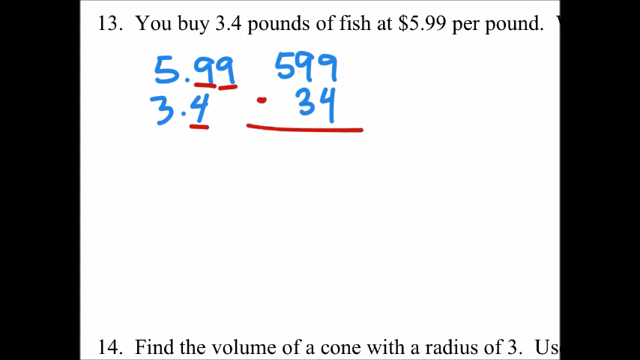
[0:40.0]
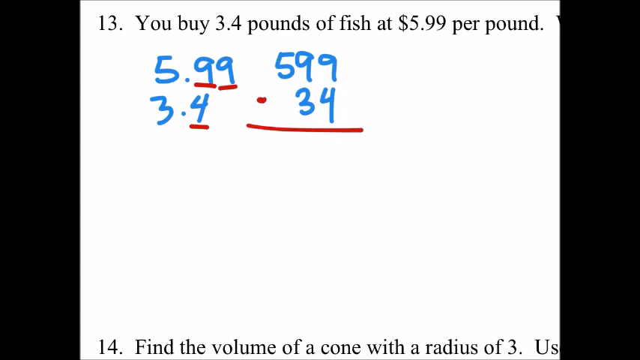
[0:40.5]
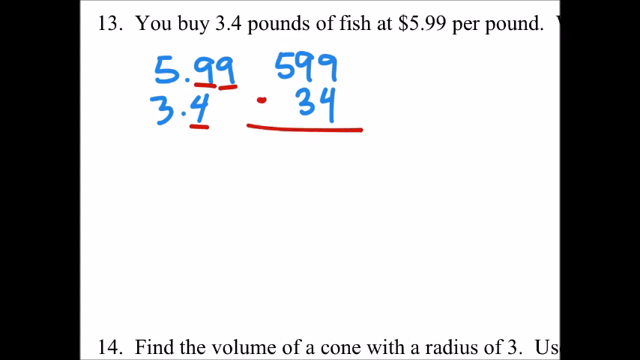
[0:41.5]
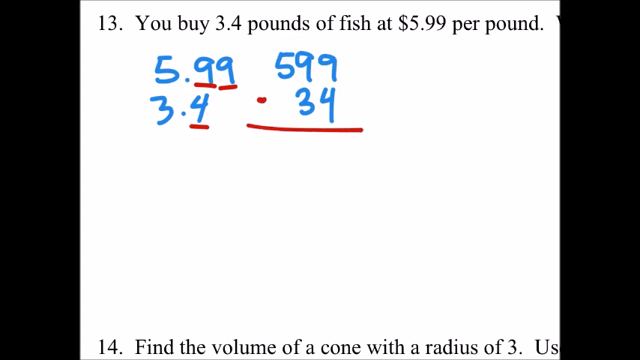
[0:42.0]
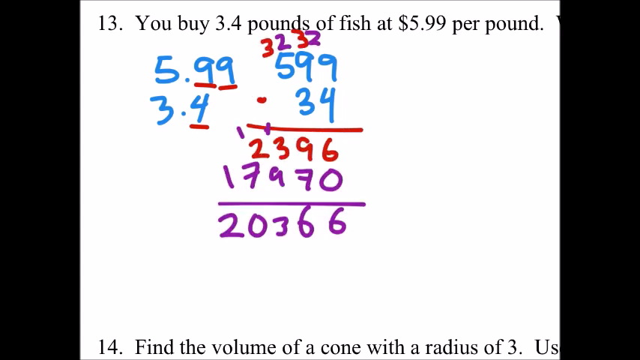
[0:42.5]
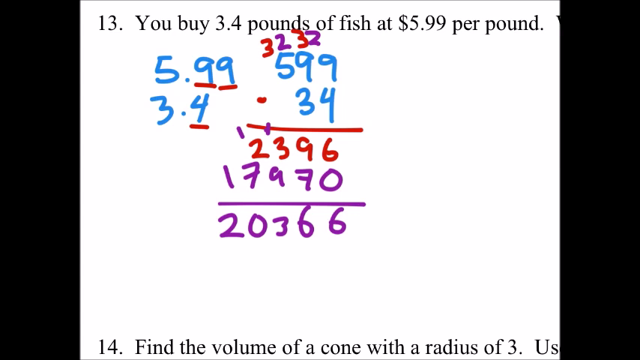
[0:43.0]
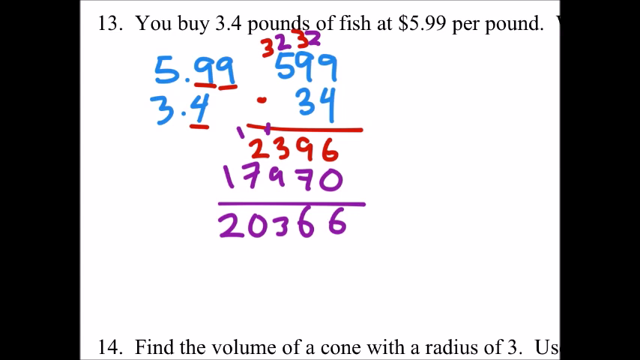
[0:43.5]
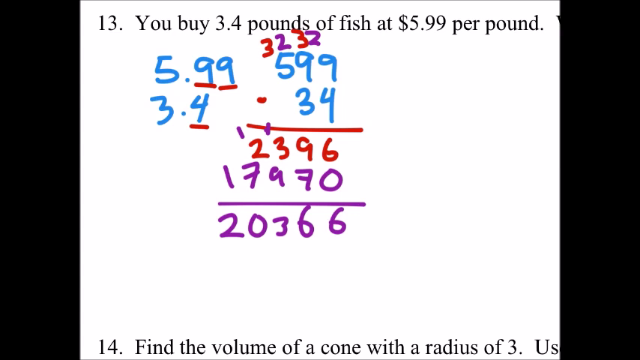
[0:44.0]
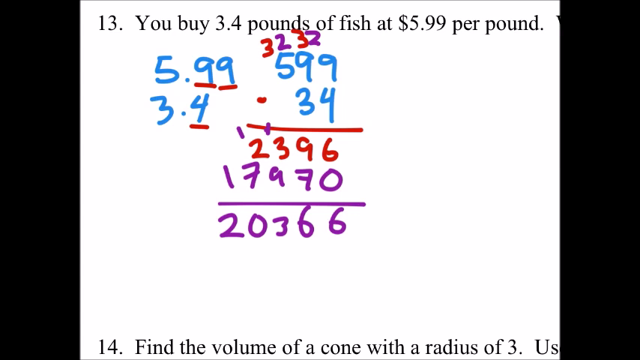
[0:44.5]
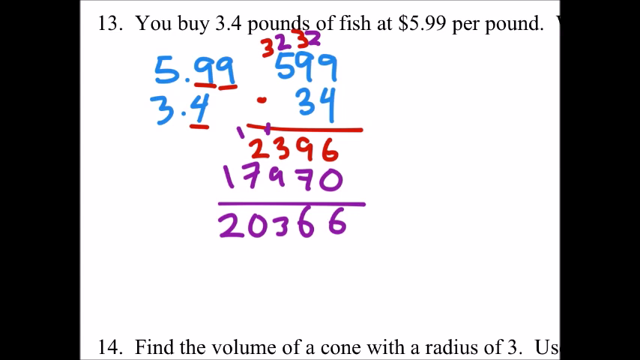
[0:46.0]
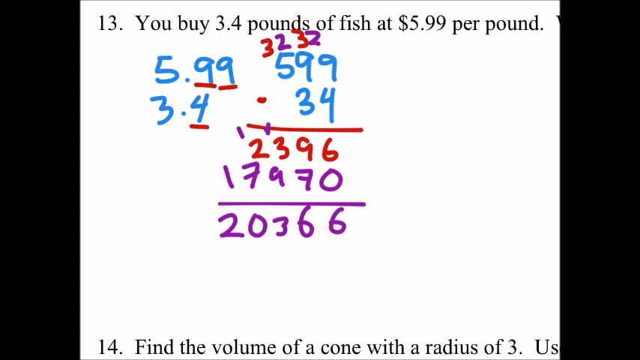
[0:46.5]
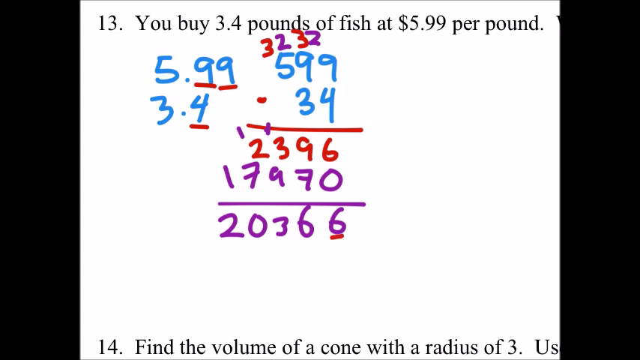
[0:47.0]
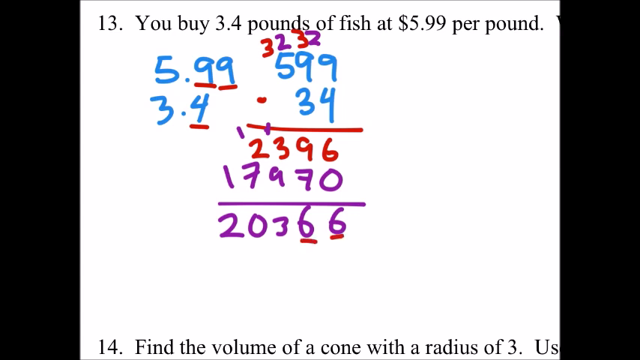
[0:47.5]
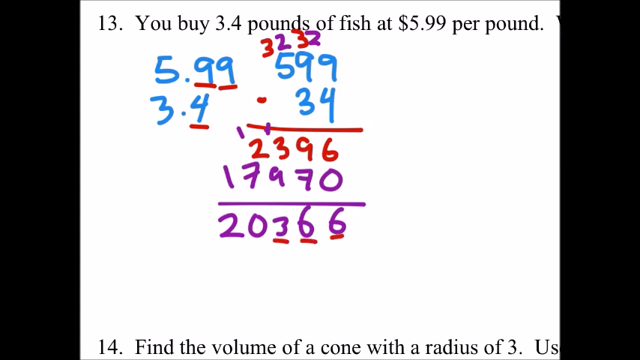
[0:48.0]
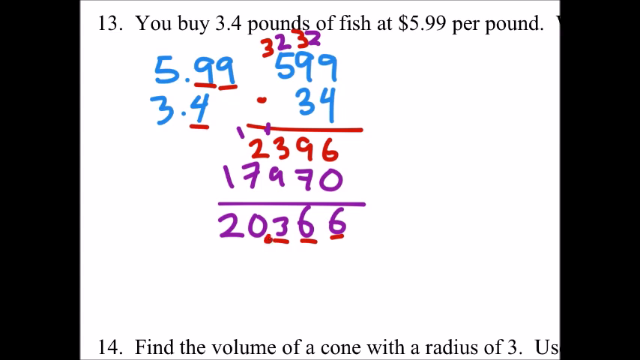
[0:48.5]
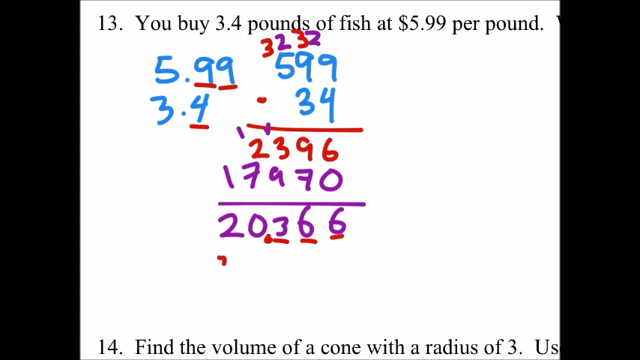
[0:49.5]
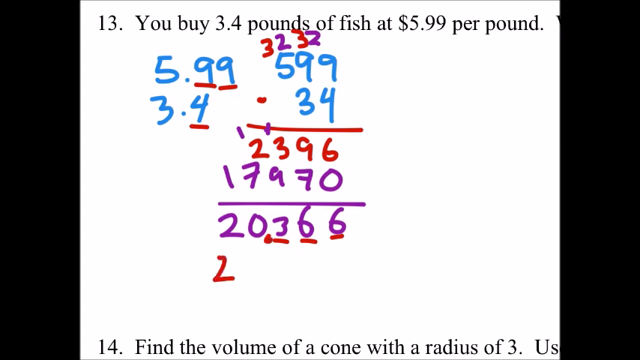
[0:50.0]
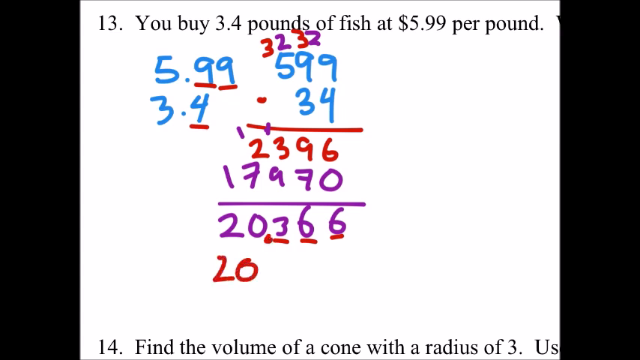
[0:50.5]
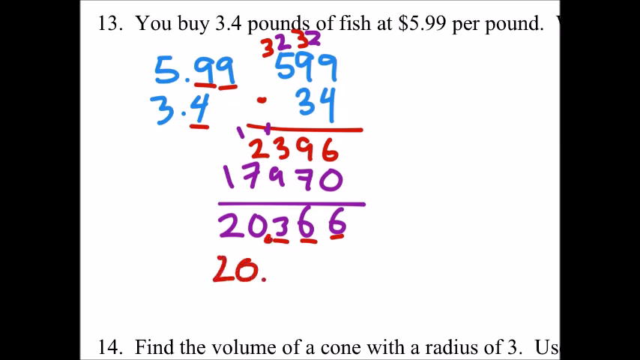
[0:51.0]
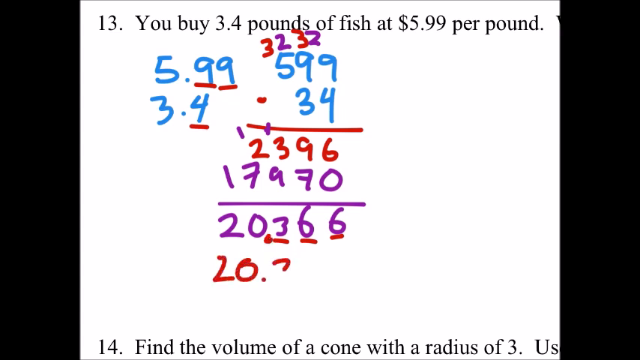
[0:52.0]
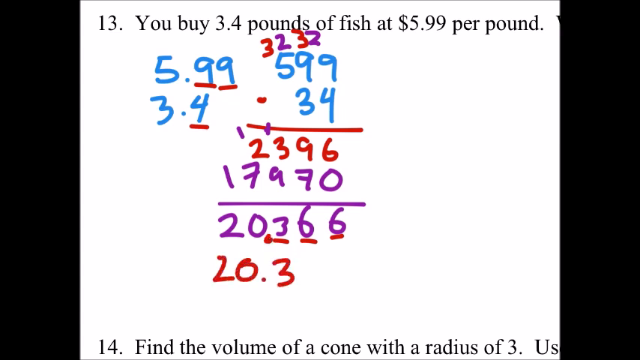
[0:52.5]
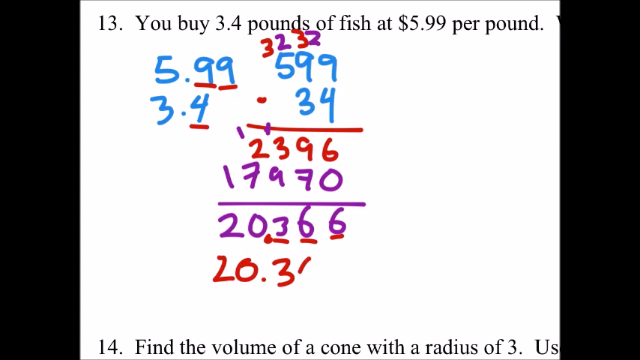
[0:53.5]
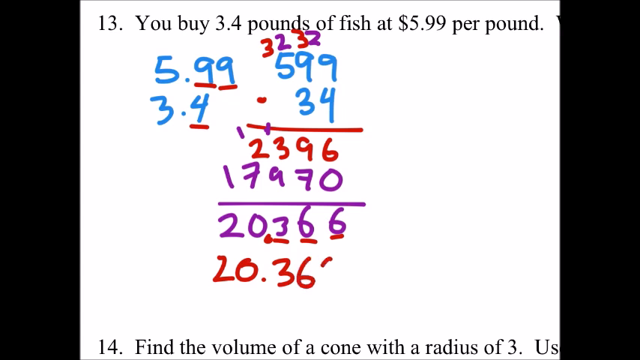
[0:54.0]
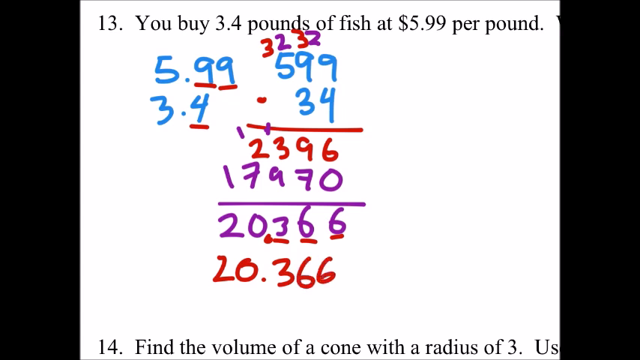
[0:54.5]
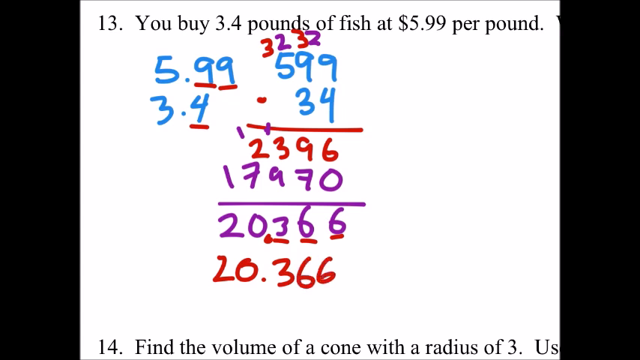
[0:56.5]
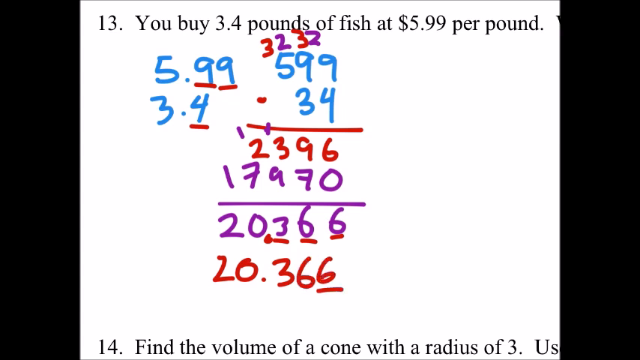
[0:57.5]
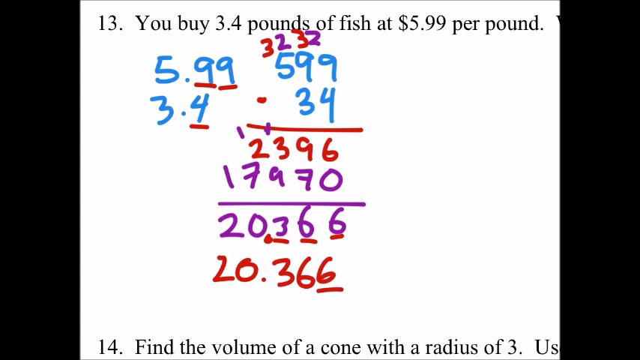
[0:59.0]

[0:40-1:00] The screen appears to be black, and in the center and right is problem "13." followed, after a space, by "you buy 3.4 pounds of fish at $5.99 per pound." In blue, 5.99 appears, and right beside it to the right is 599 in blue. Directly under 5.99 is 3.4, and directly under 599 a 3 and a 4 are written in blue. In the left set of numbers, two red lines are placed under the two nines, and a red line is placed under the 4 of the 3.4 below. In the second math problem, a red minus sign is placed by the 599 and a line goes under the 34. Number 14 comes in. Several numbers then appear as if someone is solving the problem, and the writing turns purple. The bottom number is 2366, and several red lines appear under the 366. Then 20.366 appears in red with a red underline under the 6.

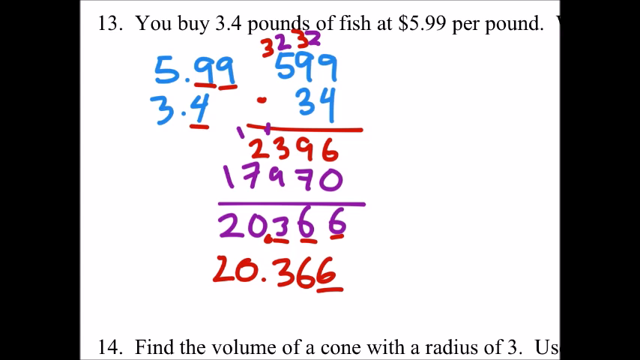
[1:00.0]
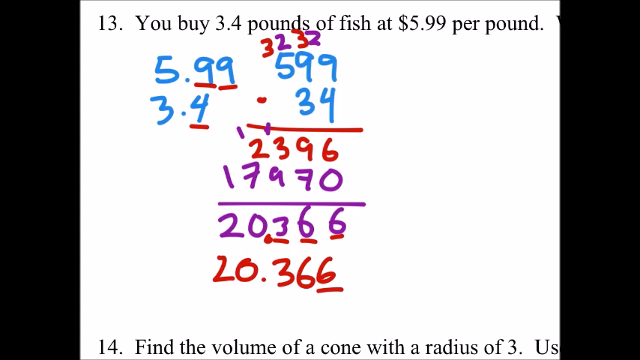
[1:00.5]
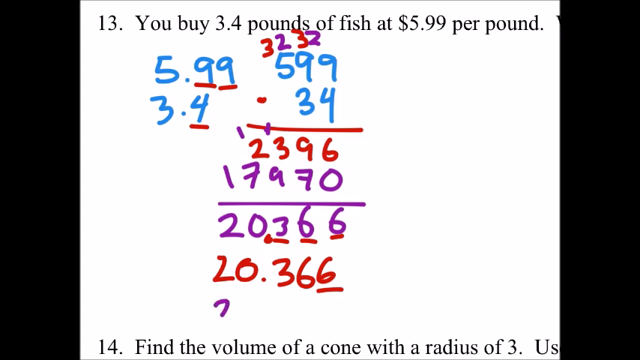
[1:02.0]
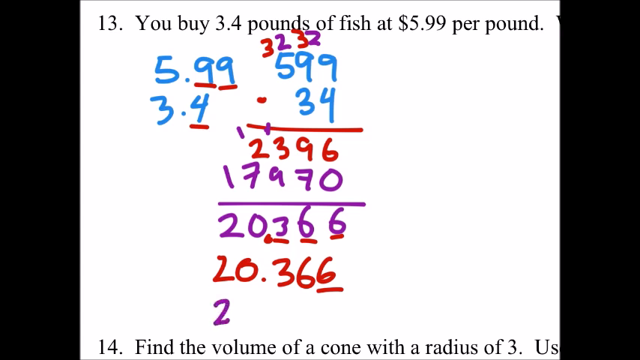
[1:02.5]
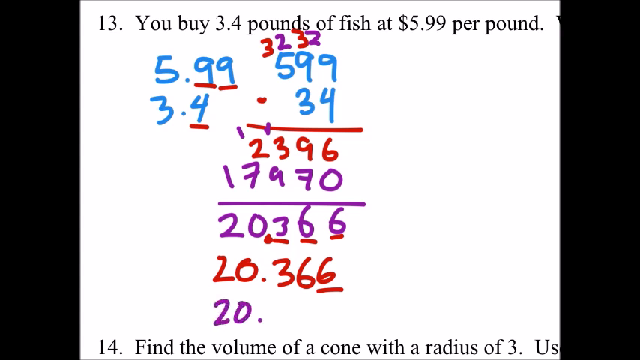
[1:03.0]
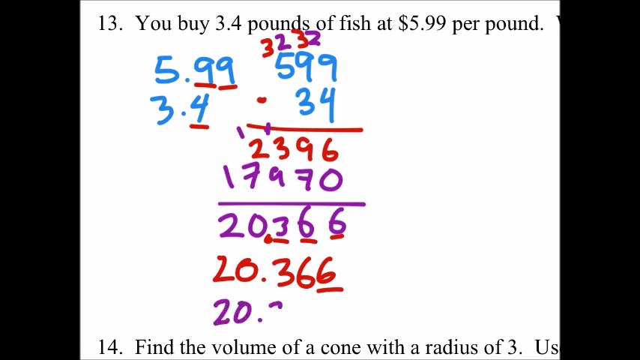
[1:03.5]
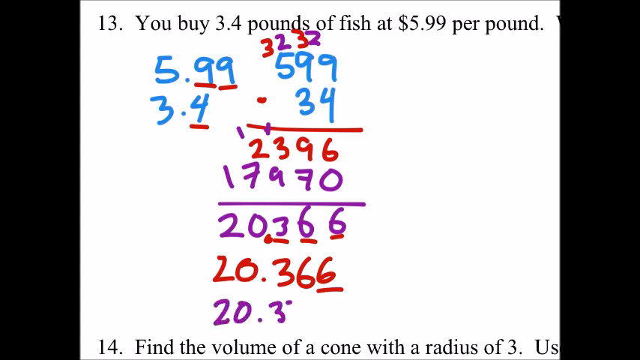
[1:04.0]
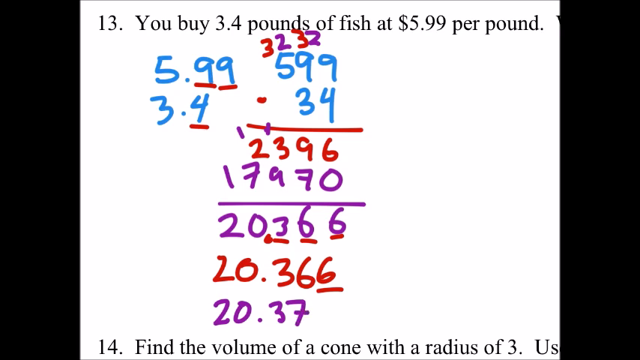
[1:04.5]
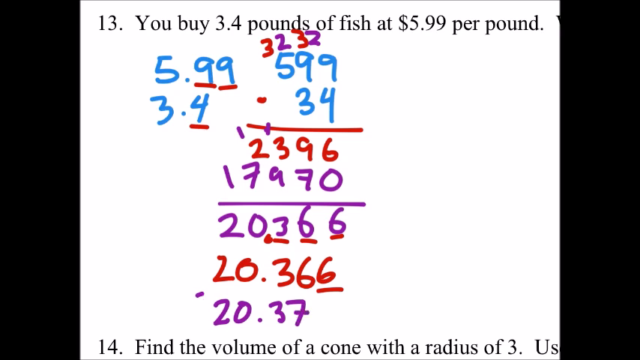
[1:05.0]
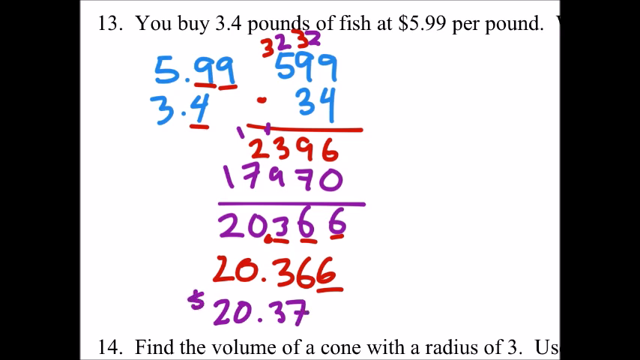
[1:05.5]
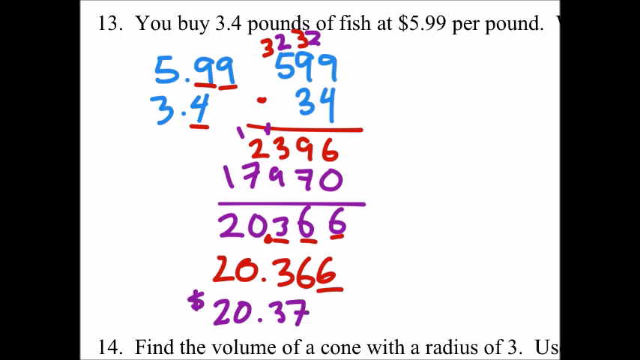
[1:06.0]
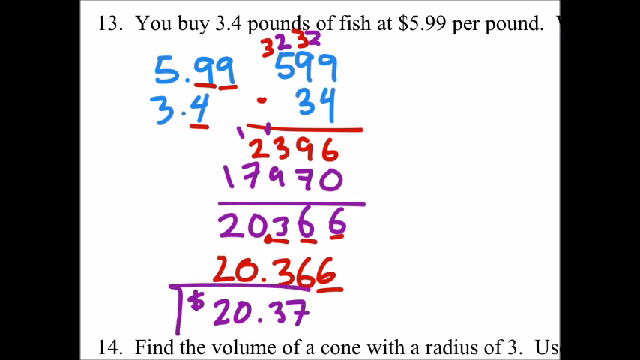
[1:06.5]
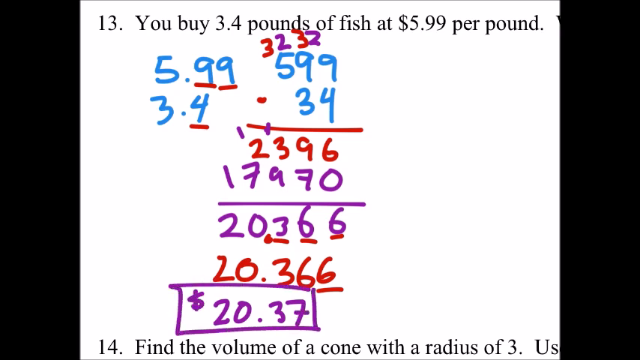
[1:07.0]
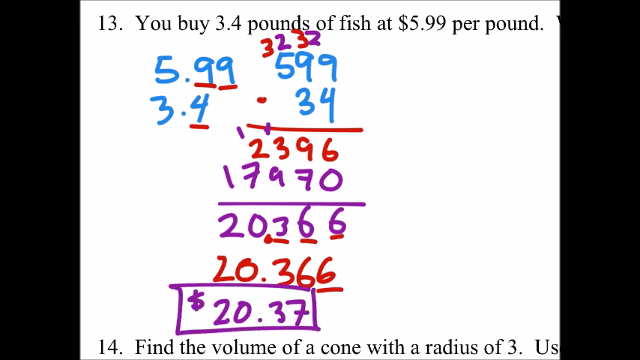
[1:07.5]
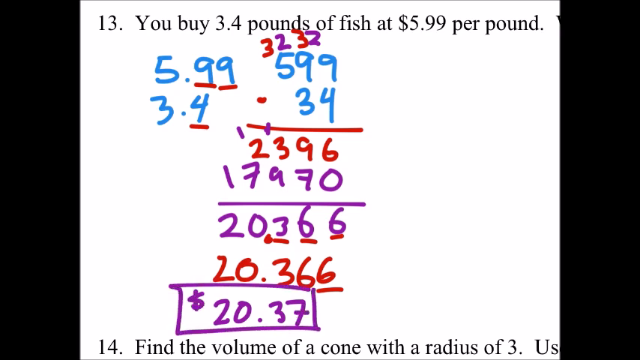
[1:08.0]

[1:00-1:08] A black background surrounds what appears to be a white section in the center, possibly a white piece of paper, forming a large square. It contains question number 13 with its statement, followed by several numbers written in blue, red and purple as a math equation. On the left, 5.99 is written with 3.4 under it, all in light blue. To the right is 599, a red minus sign, a blue 34, and a red line under them. Near the 599 on the right are the digits 3, 2, 3, 2, with the 3s in red and the 2s in purple. Under the answer to the problem on the right-hand side is 2396 in red. Under 2396 is 17970 in purple with a purple underline, and under that underline is a purple 20366, with a separate underline under each digit of the 366. Below that number, 20.366 is written in red with a red underline under the 6.